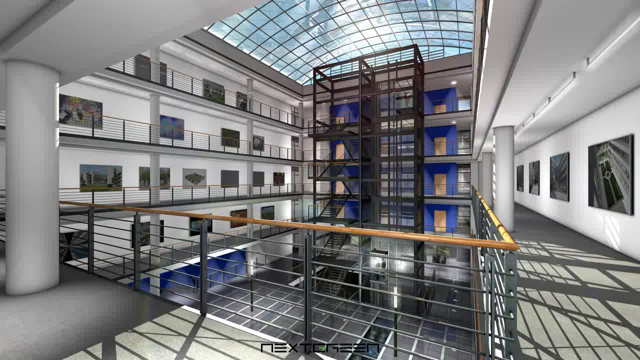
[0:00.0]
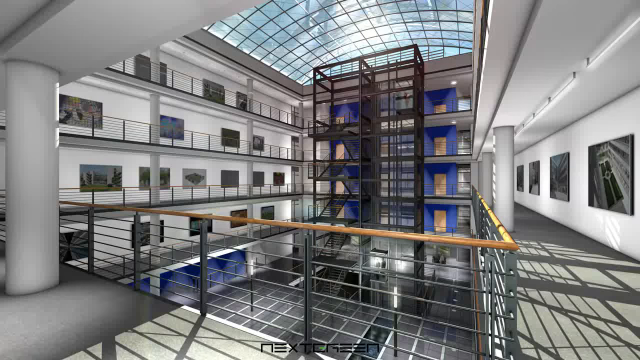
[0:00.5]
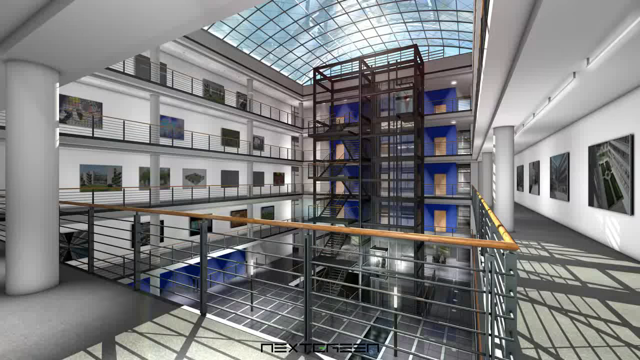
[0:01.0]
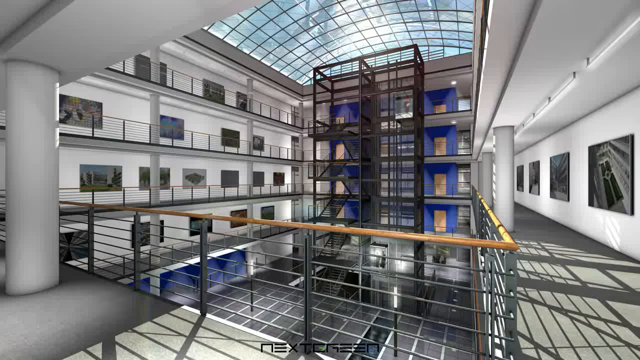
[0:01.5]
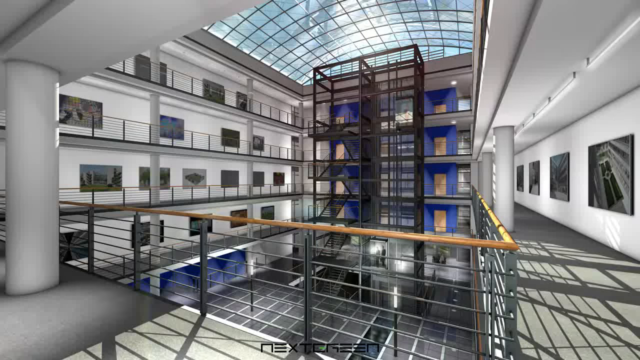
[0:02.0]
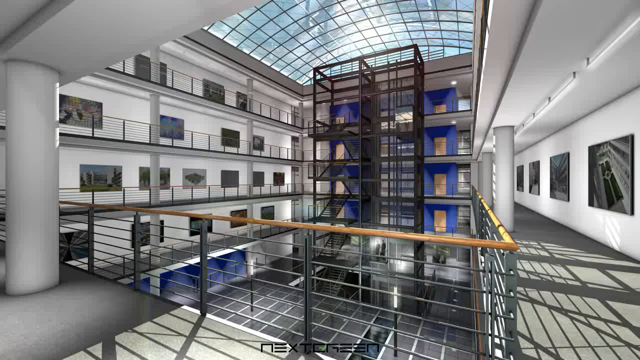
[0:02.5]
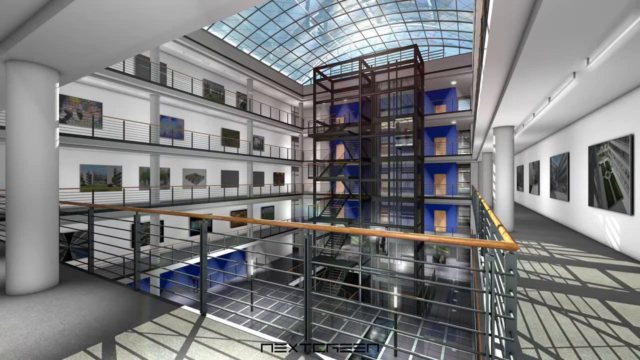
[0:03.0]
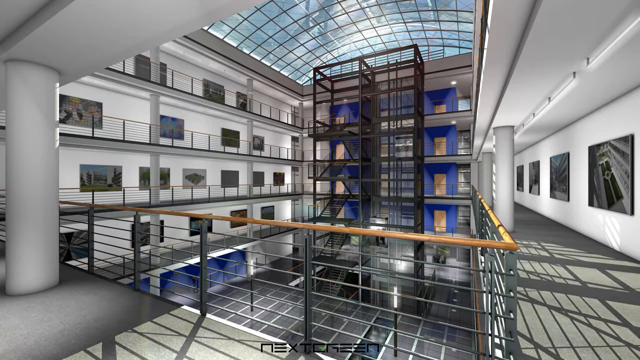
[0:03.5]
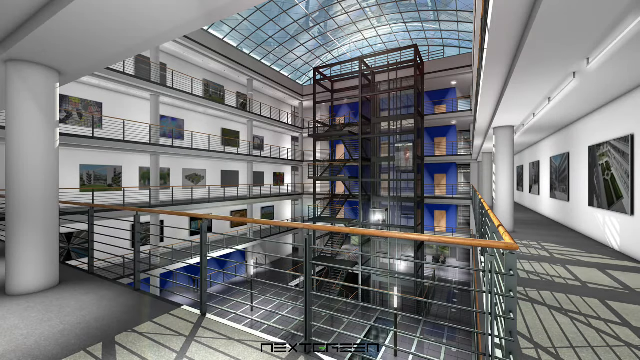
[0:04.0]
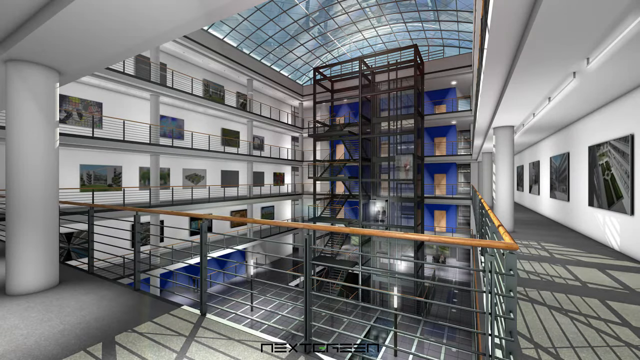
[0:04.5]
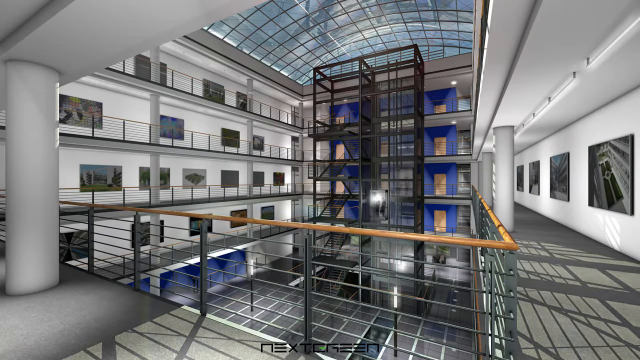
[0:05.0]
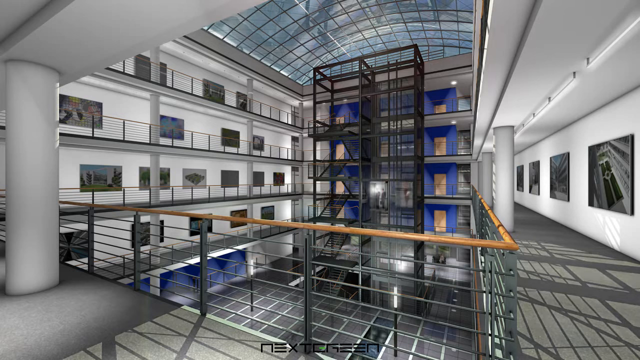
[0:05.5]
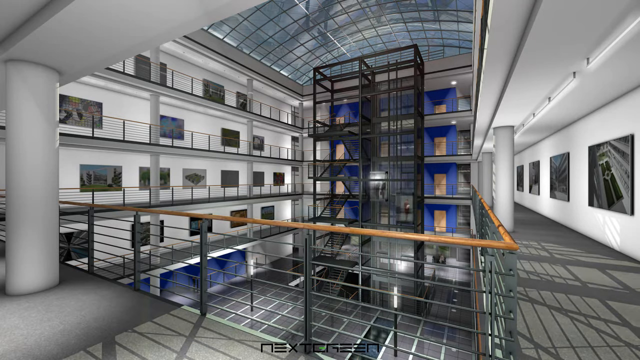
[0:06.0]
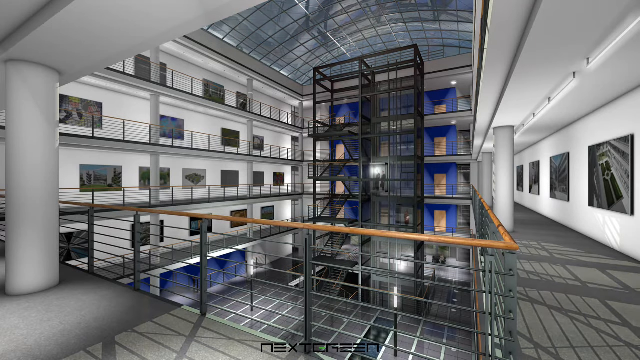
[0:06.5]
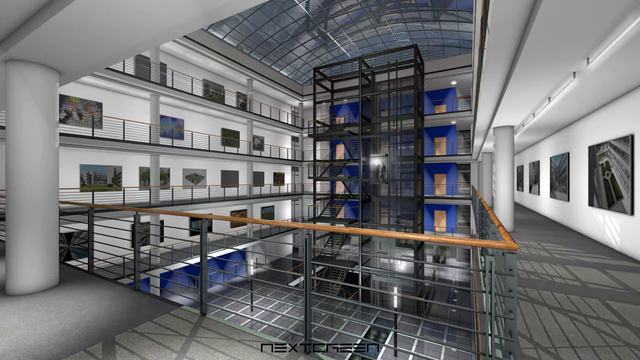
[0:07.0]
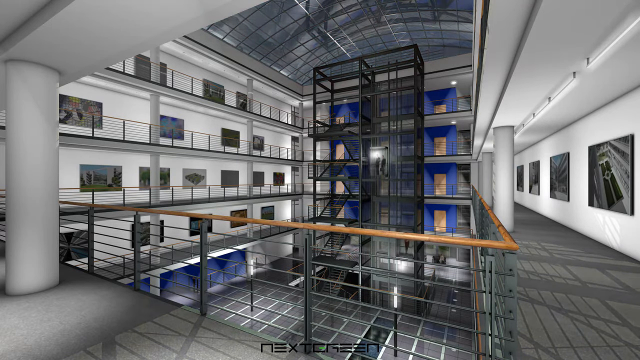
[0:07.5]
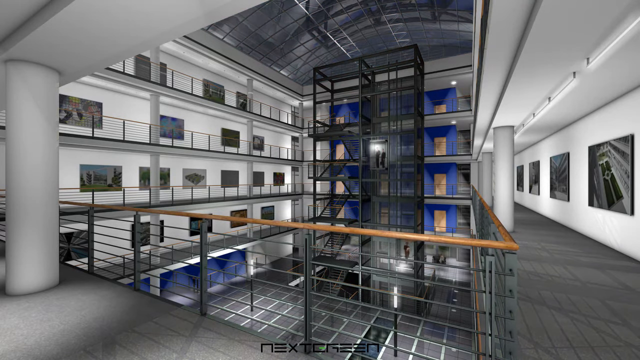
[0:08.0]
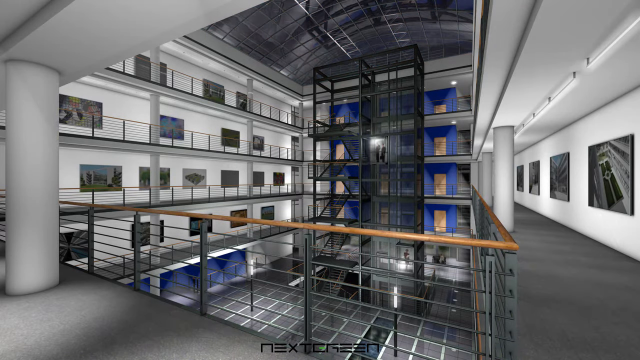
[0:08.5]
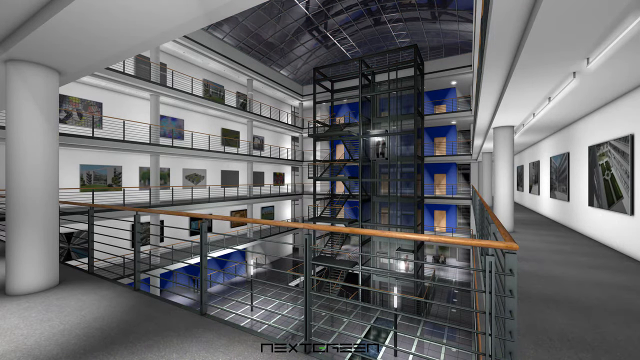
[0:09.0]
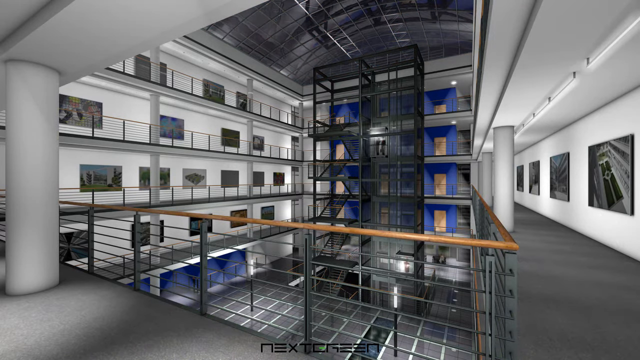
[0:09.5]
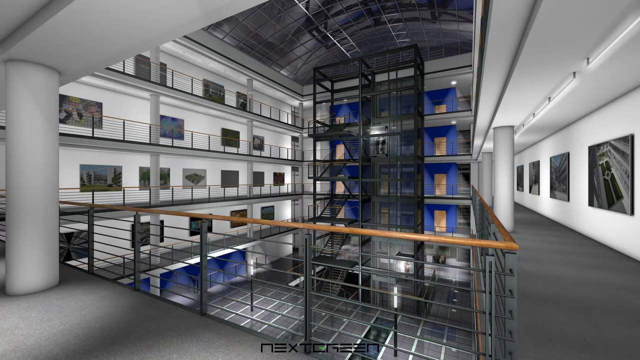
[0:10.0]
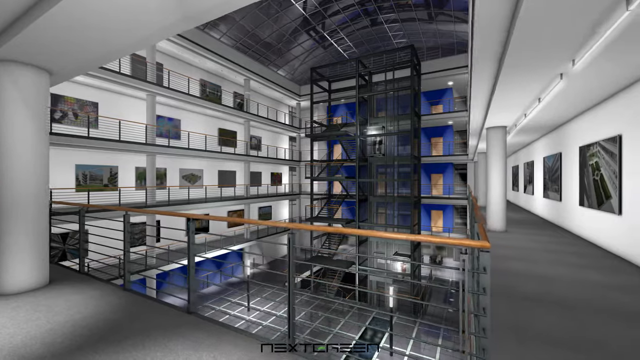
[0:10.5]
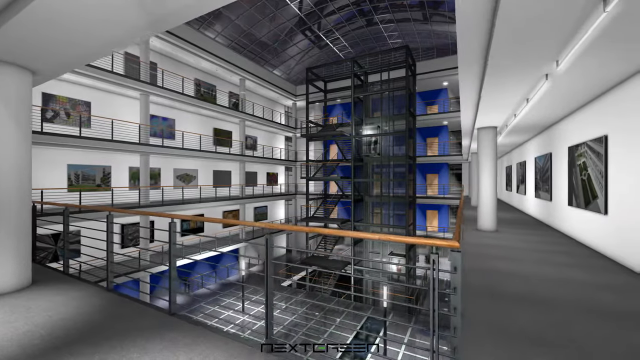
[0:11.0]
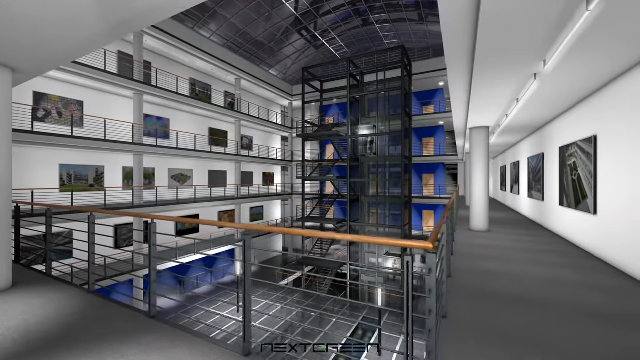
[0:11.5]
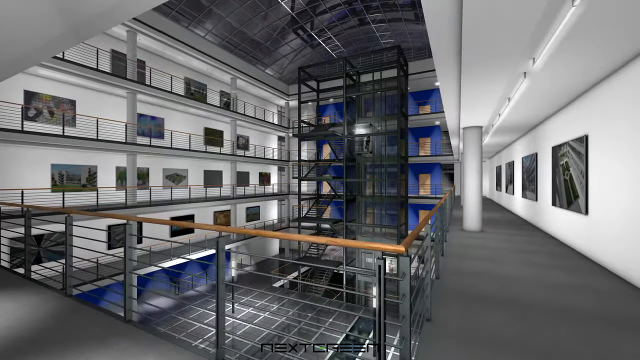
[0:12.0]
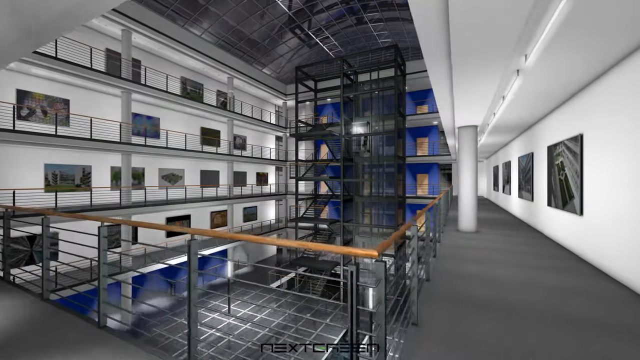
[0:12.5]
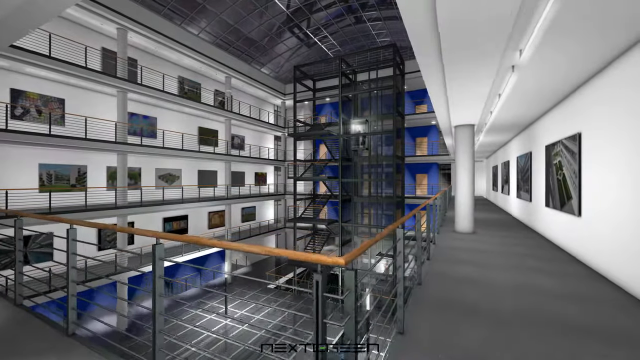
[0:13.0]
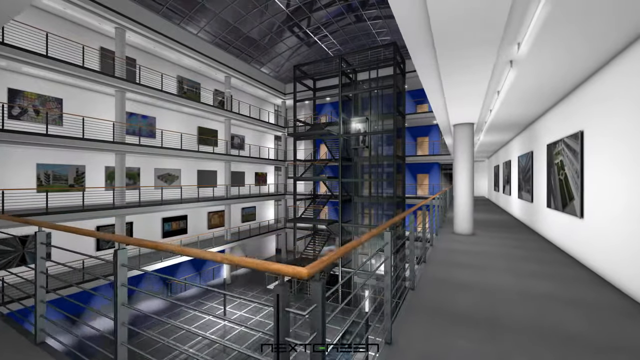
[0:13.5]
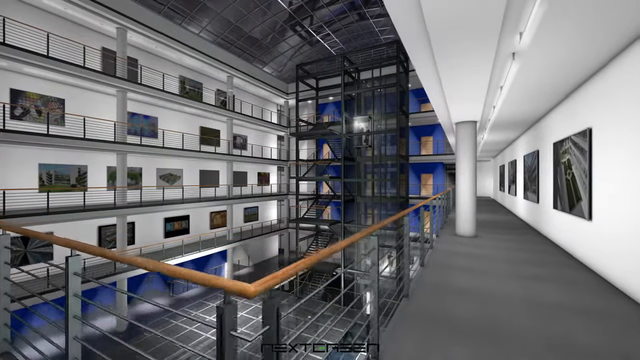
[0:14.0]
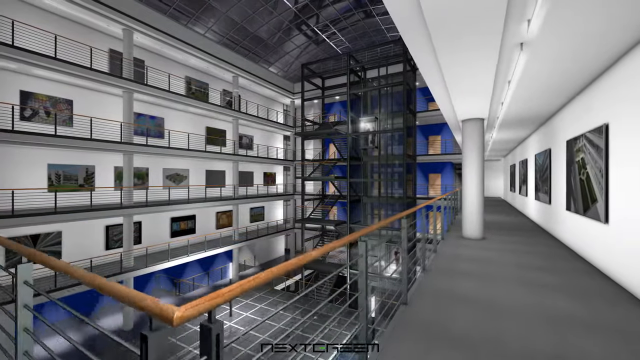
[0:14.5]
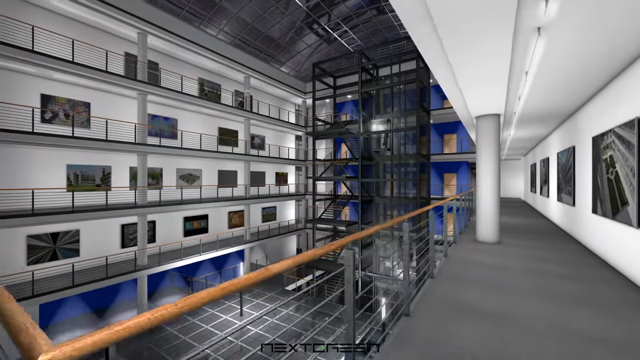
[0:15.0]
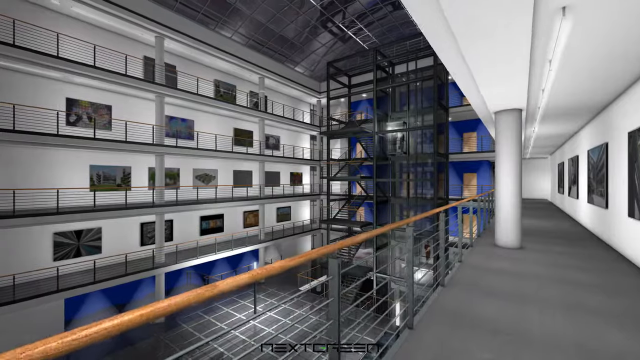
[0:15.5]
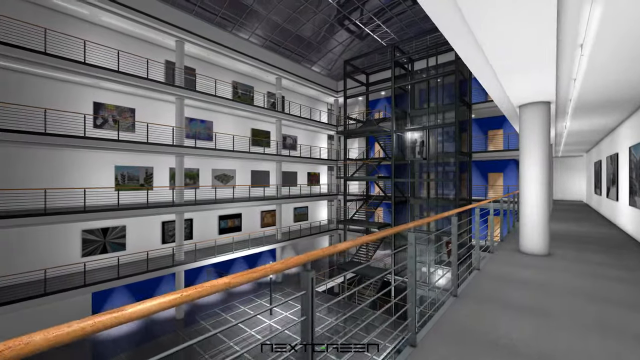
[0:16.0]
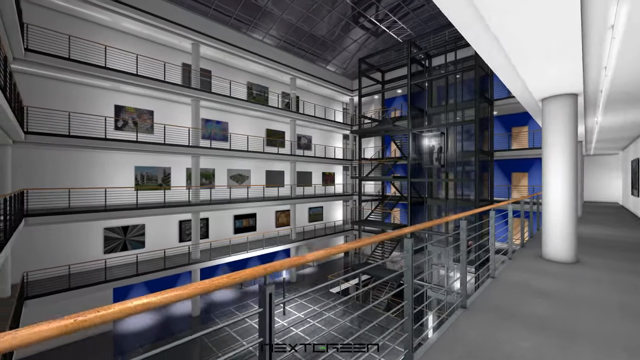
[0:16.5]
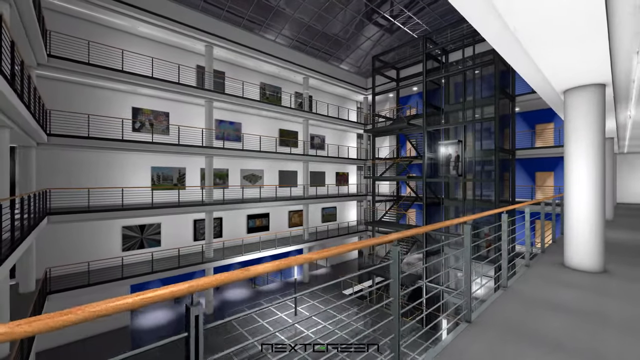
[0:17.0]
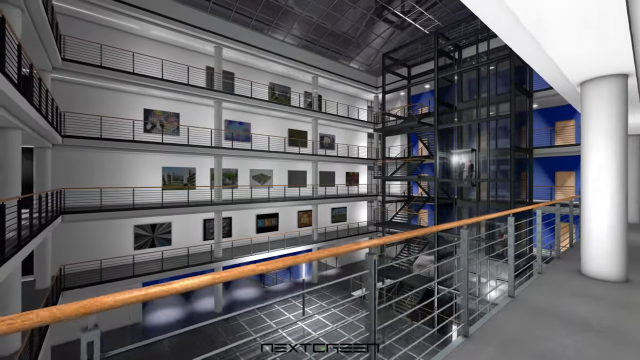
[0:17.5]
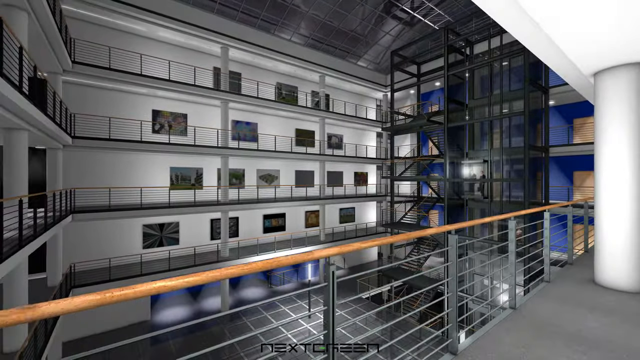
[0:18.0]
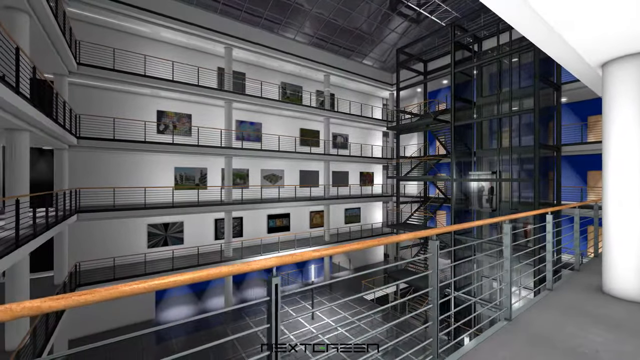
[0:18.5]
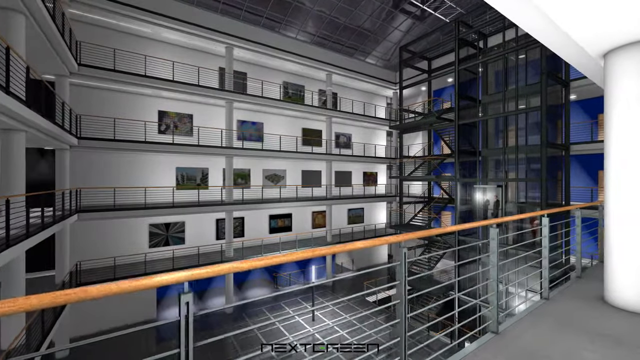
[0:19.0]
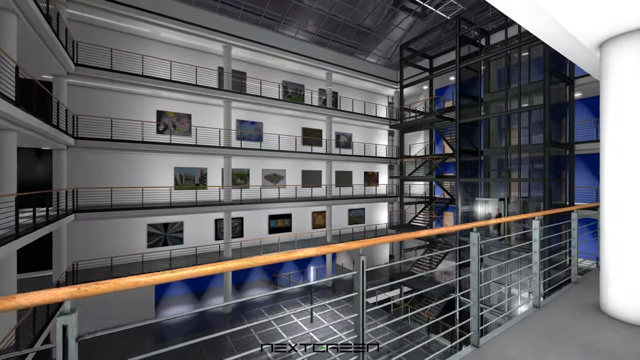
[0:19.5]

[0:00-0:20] The main subject appears to be a building that looks like an office building. It is not a real building but a computer-generated animation. The building is very modern with an open design, and its offices and rooms are on different levels. A large open atrium has a large curved roof made entirely of glass; it is not quite a dome, but it is definitely curved. Light comes through the glass, making the building very bright. There are people in the elevator. The main colors are white and blue, with some wood tones, and the floor is black.